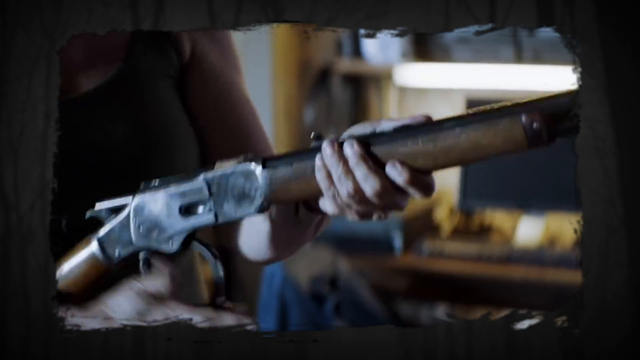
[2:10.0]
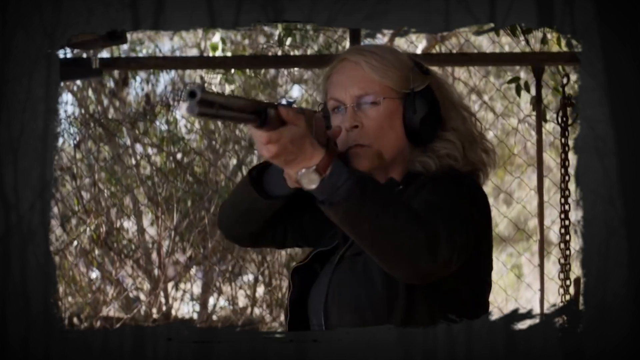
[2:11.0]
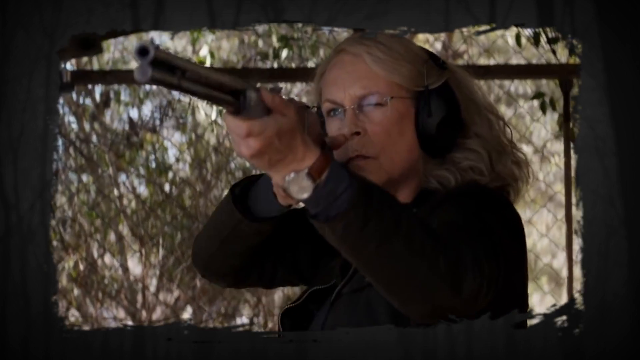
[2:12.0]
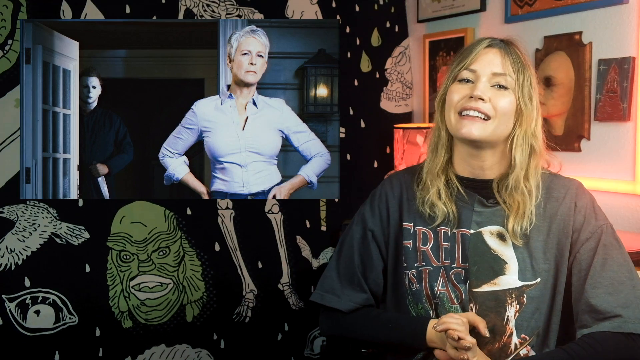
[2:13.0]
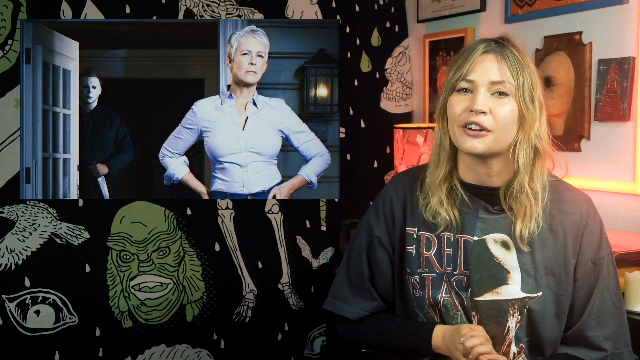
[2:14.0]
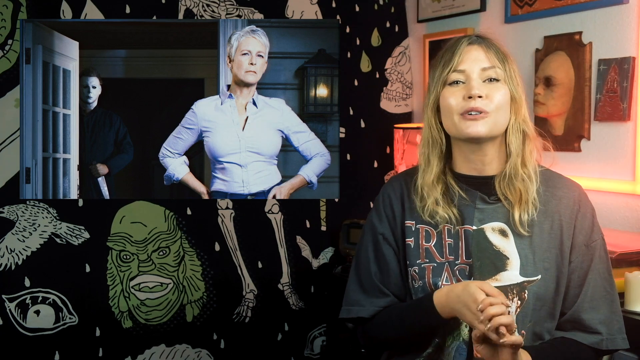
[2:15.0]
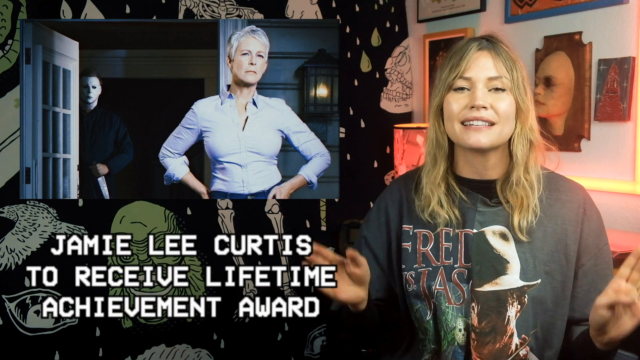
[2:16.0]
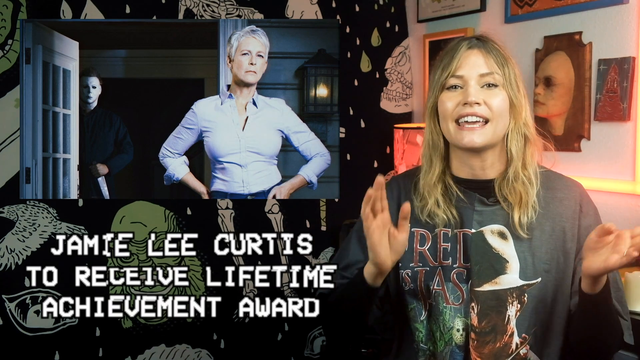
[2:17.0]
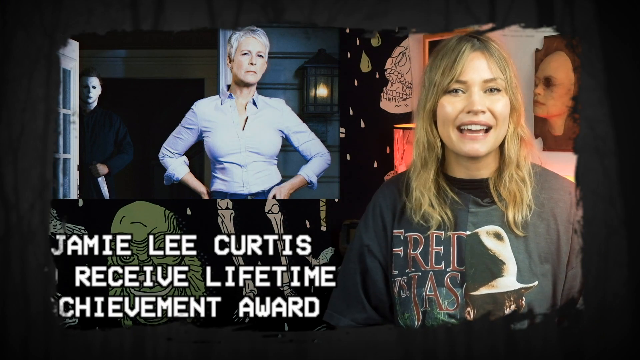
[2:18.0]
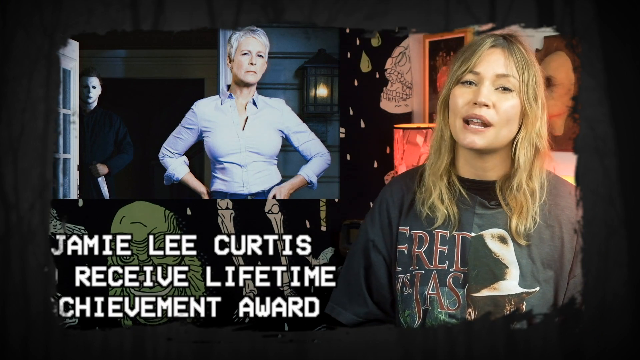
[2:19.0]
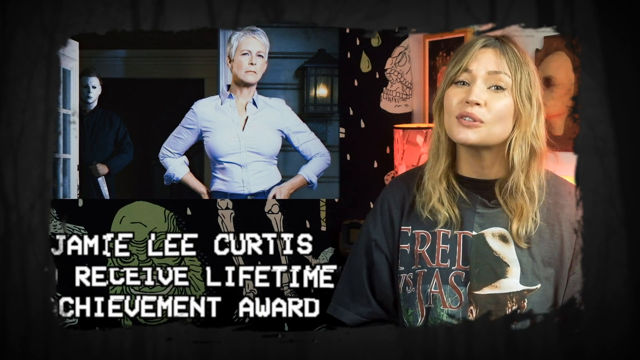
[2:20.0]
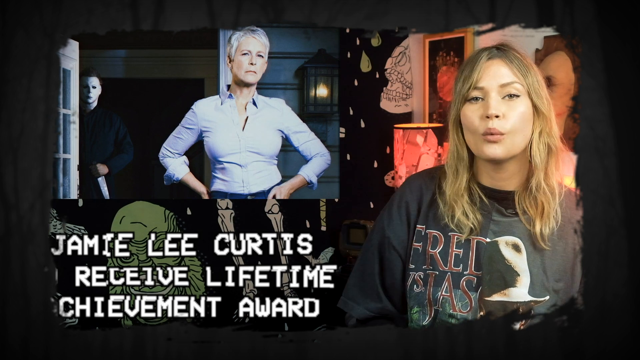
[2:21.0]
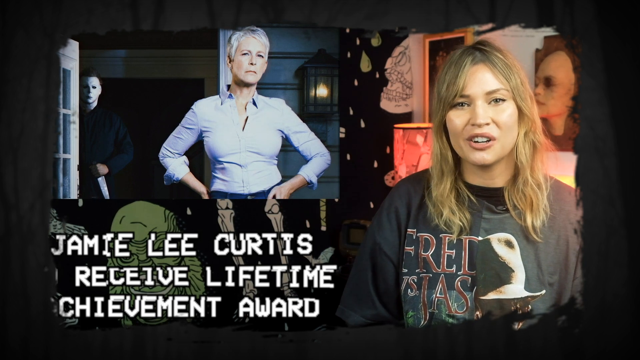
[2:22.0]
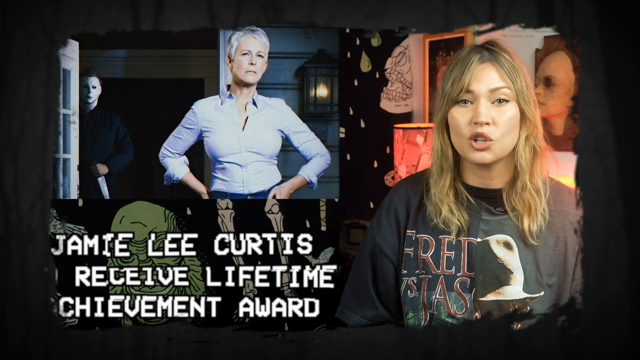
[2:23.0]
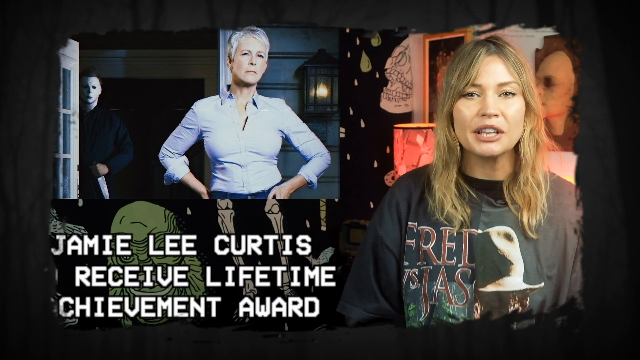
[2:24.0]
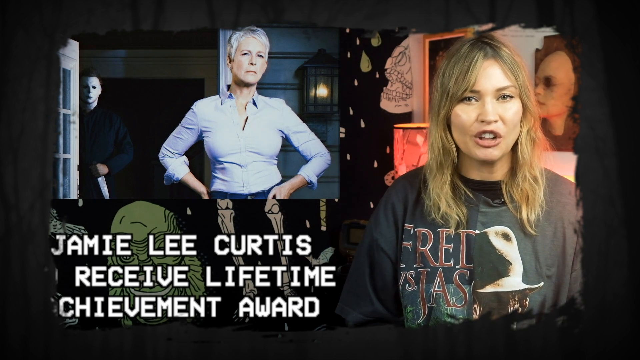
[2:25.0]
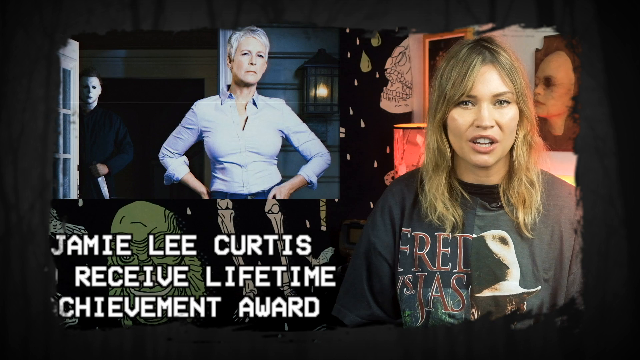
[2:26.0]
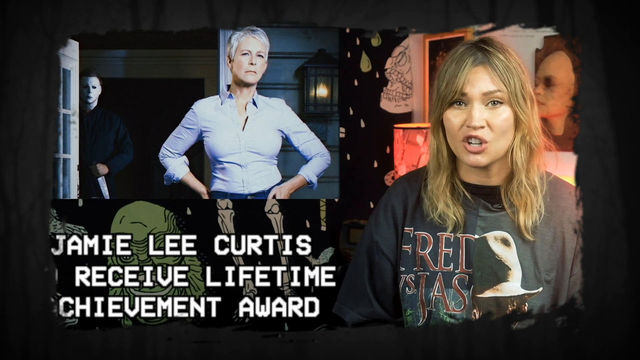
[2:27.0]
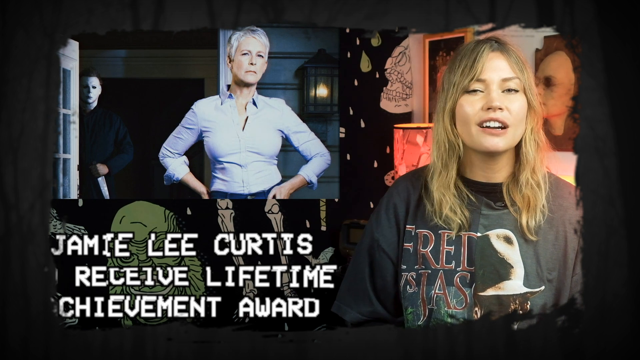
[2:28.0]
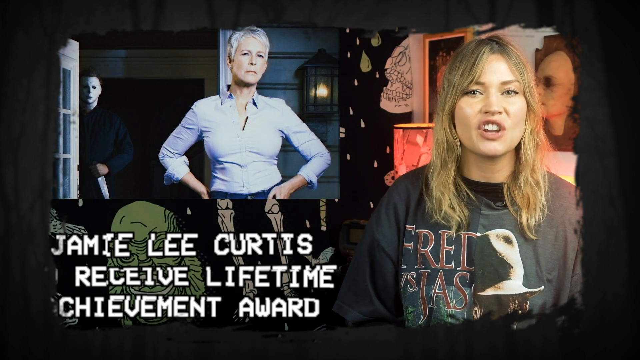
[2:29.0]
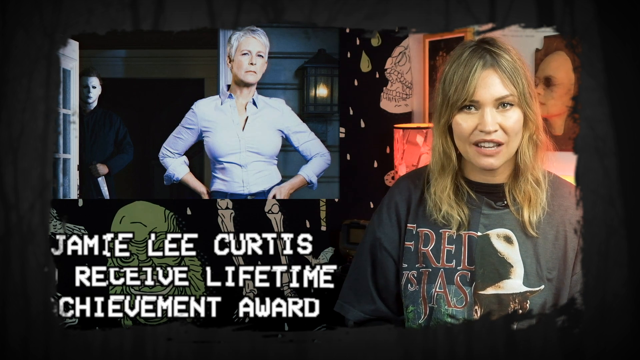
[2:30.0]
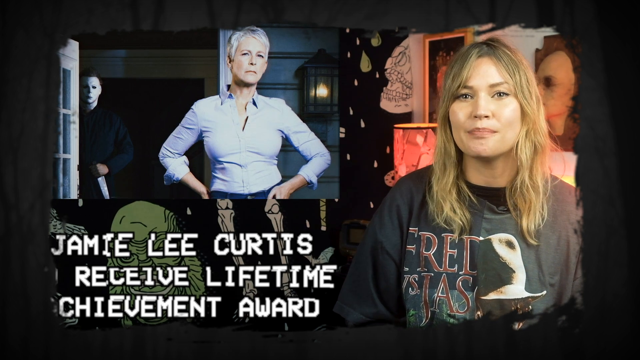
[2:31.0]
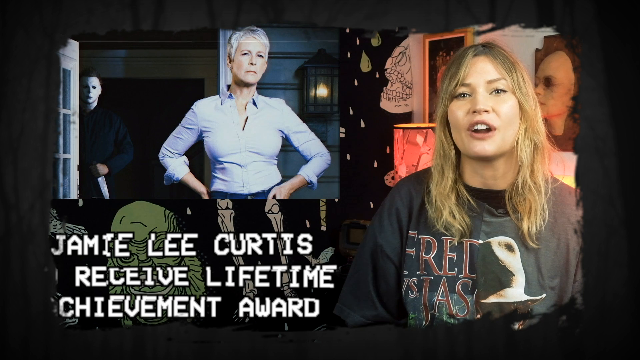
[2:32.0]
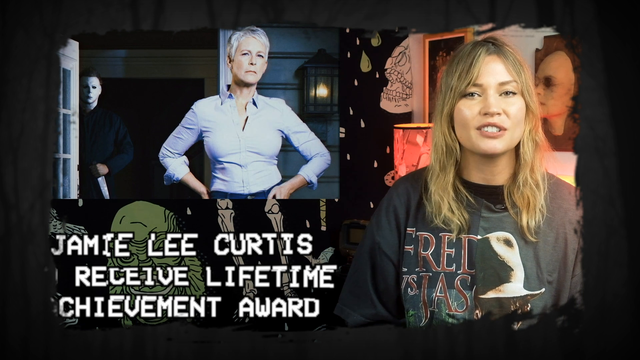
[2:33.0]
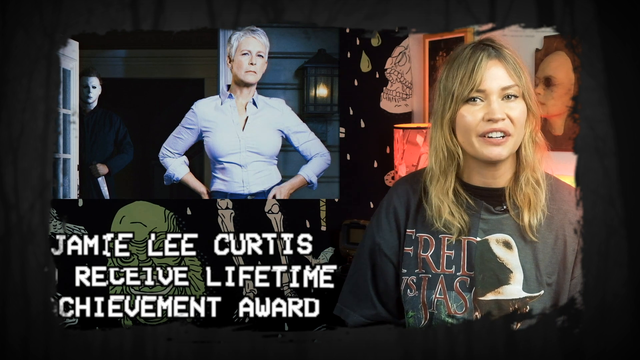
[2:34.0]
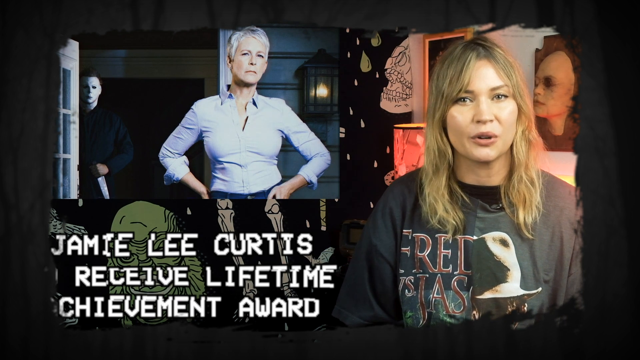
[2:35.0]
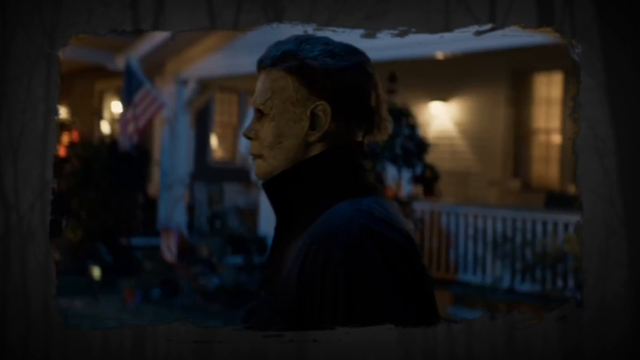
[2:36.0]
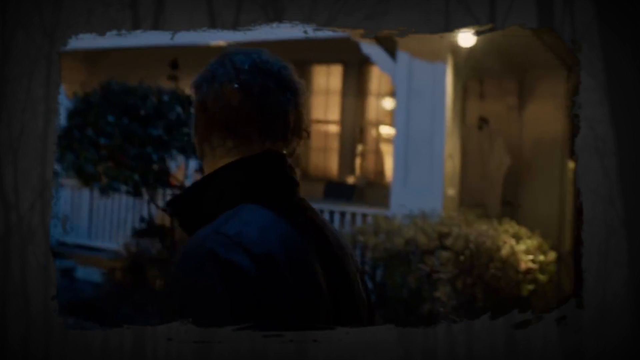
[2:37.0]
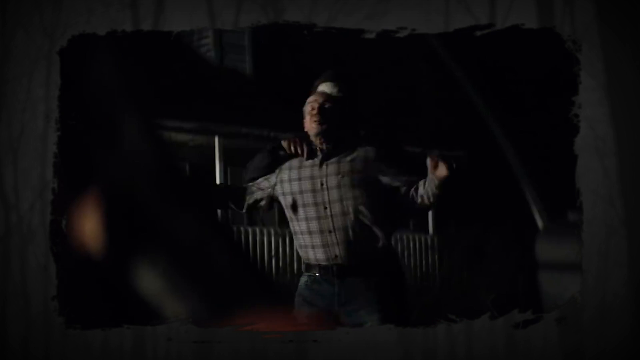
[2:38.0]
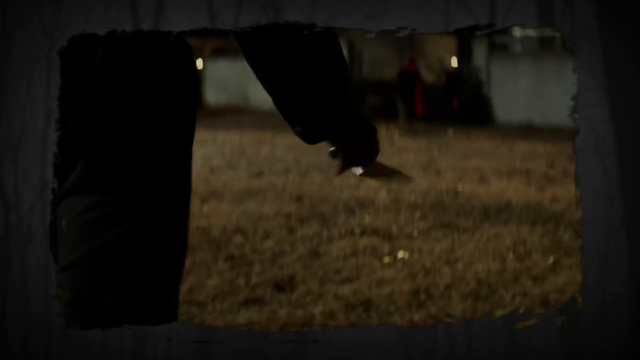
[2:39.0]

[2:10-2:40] The scene continues with Jamie holding a gun; she wears black clothing, glasses and headphones, and looks very serious and ready to shoot at the range. Whitney appears again, speaking about Jamie. Another movie scene follows in which Jamie is the main character, set against a bad guy in a white mask who roams around killing people.